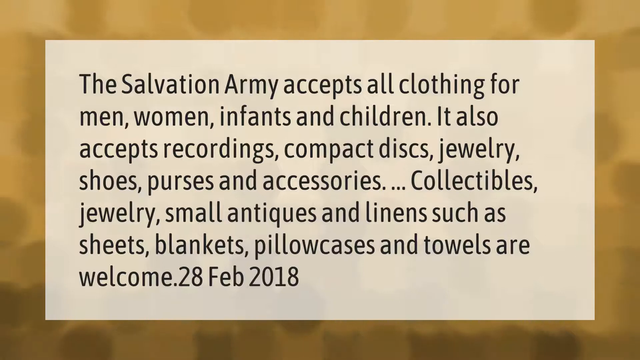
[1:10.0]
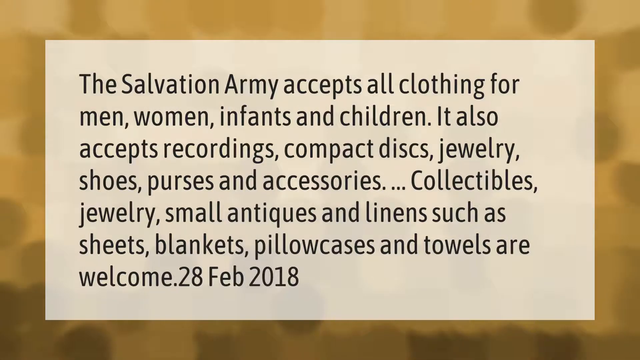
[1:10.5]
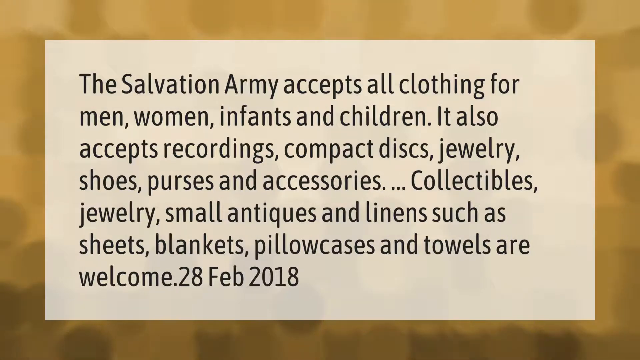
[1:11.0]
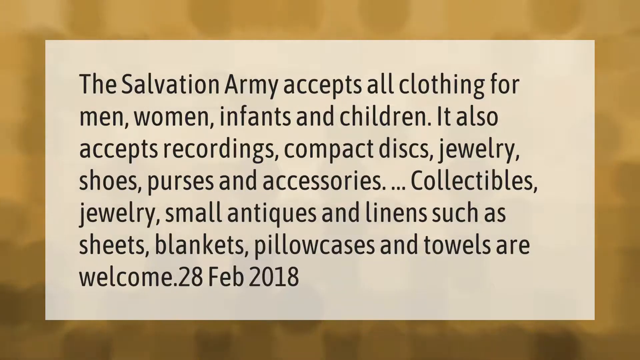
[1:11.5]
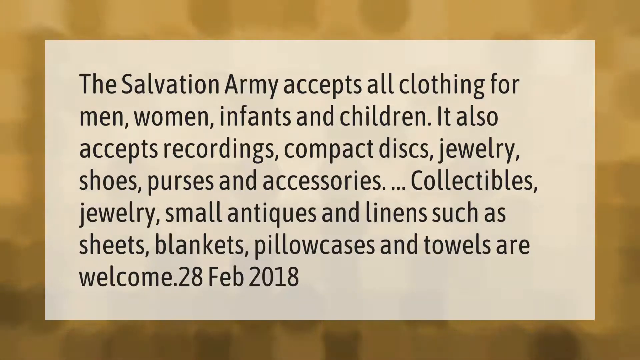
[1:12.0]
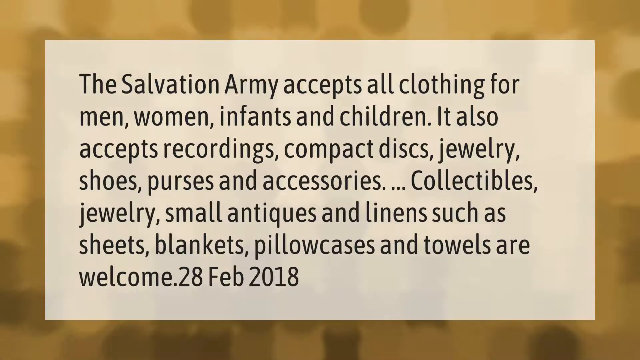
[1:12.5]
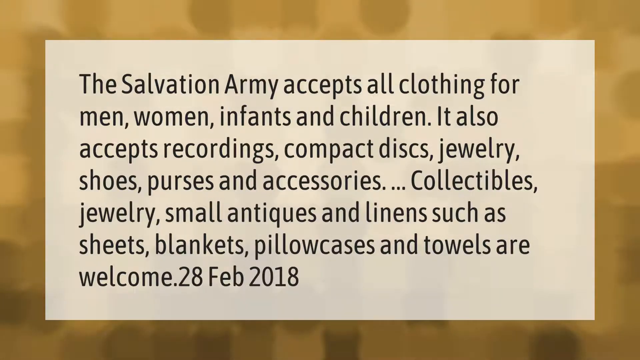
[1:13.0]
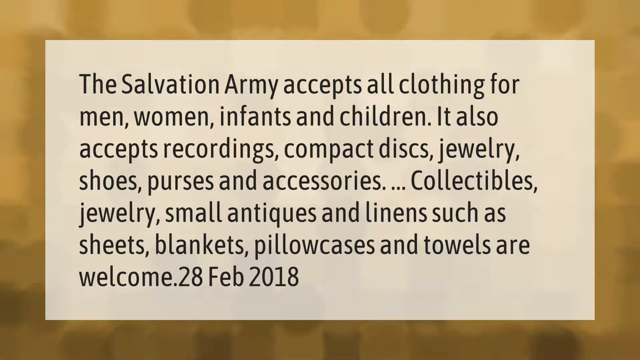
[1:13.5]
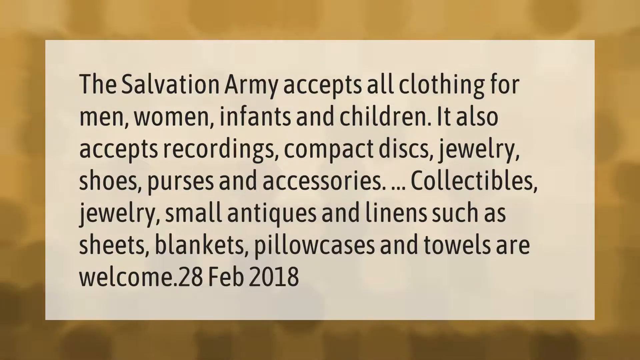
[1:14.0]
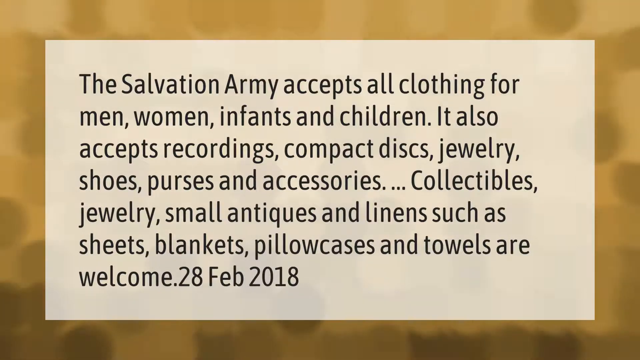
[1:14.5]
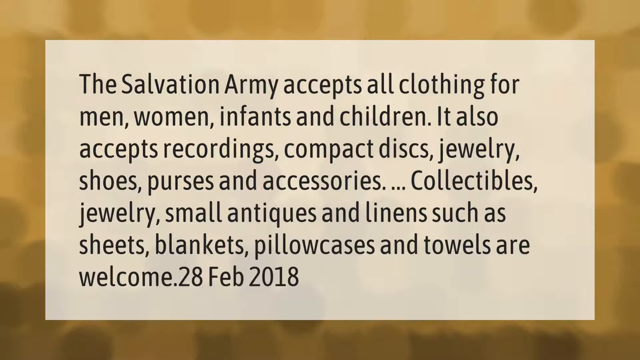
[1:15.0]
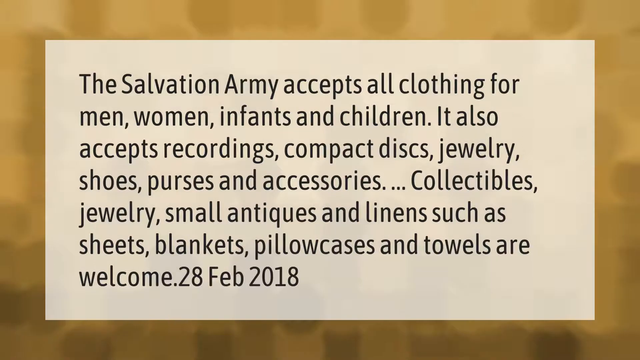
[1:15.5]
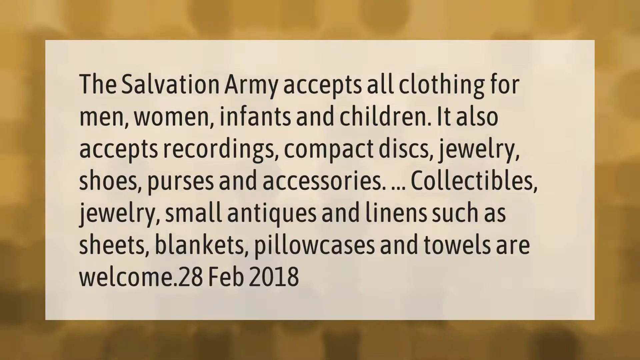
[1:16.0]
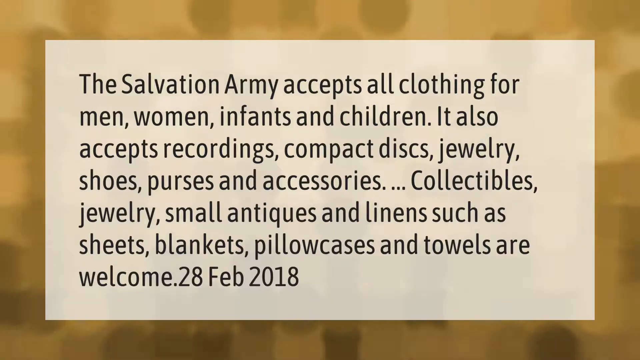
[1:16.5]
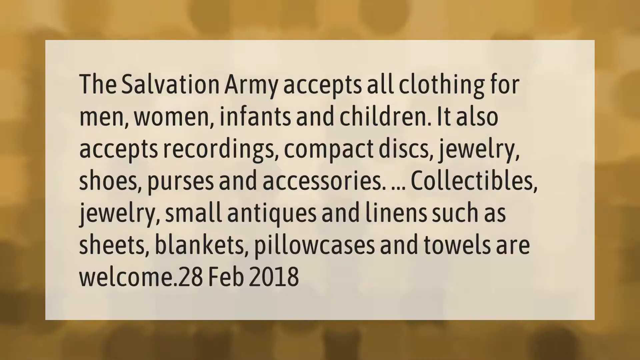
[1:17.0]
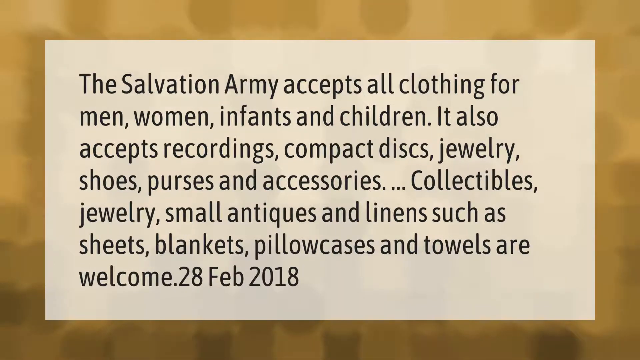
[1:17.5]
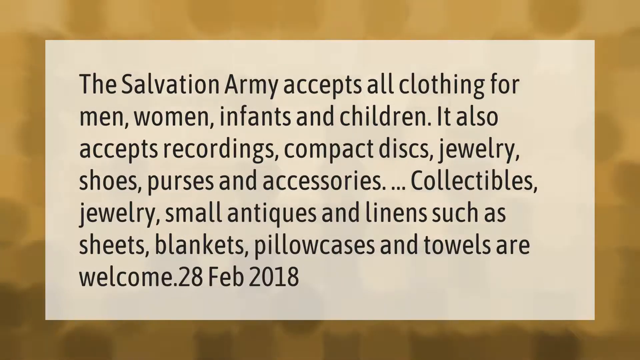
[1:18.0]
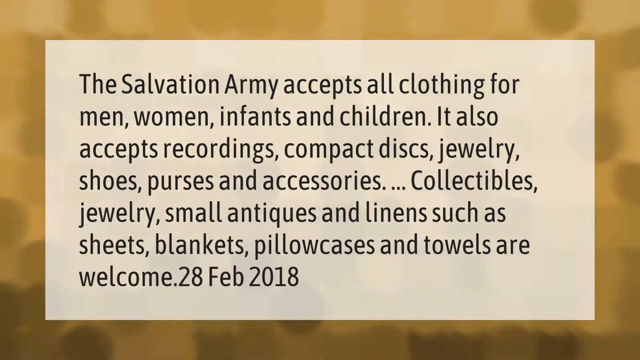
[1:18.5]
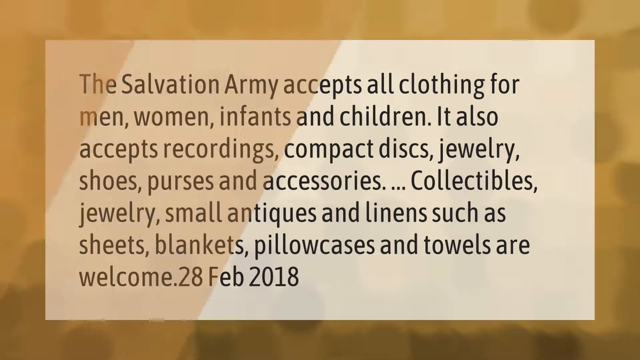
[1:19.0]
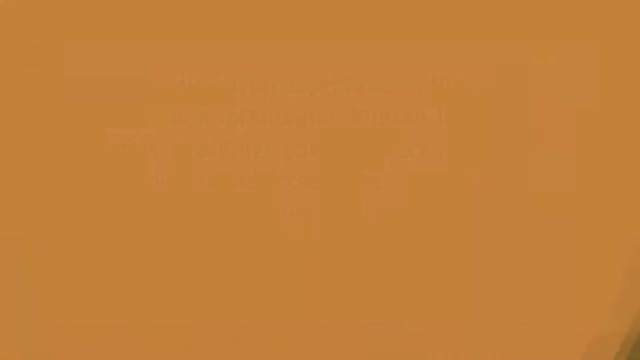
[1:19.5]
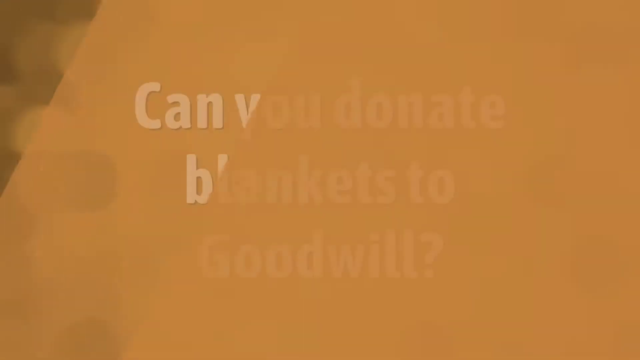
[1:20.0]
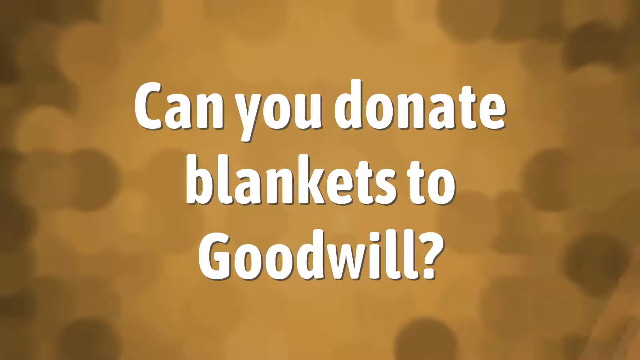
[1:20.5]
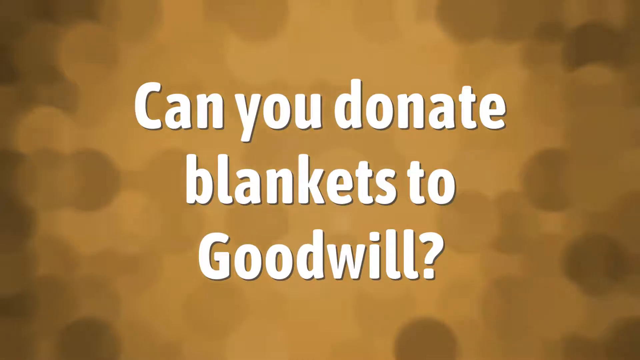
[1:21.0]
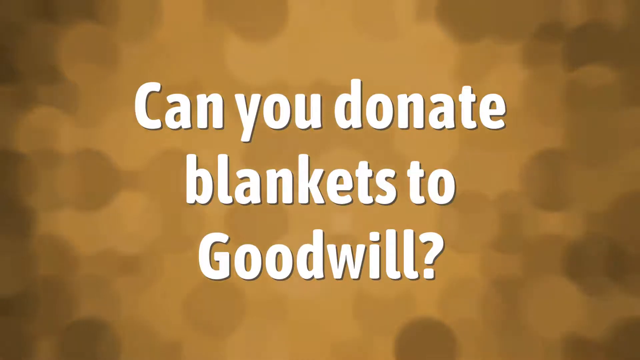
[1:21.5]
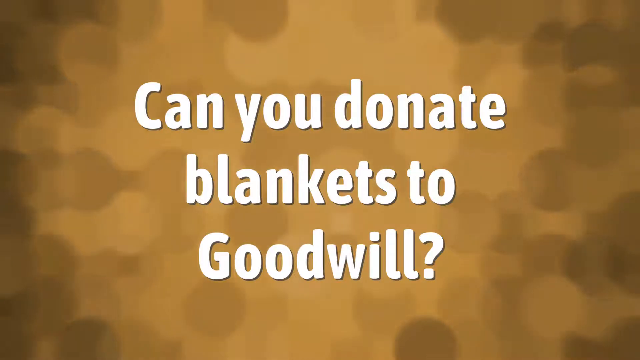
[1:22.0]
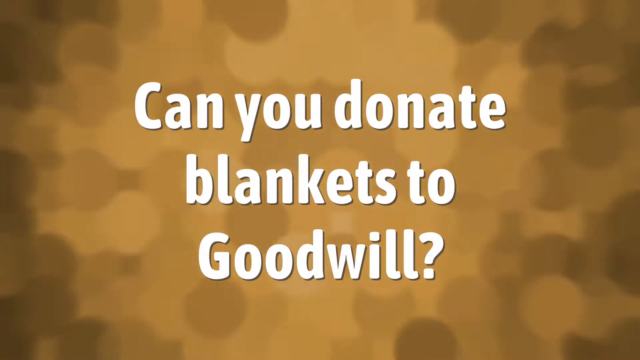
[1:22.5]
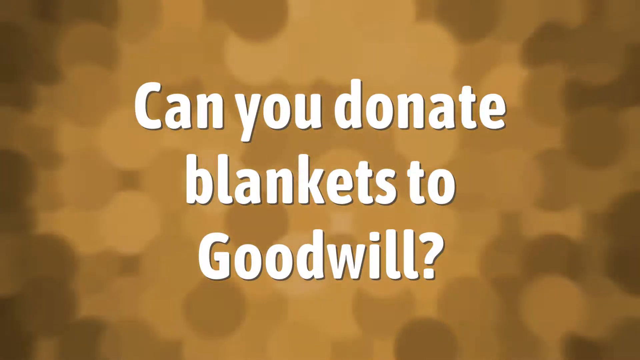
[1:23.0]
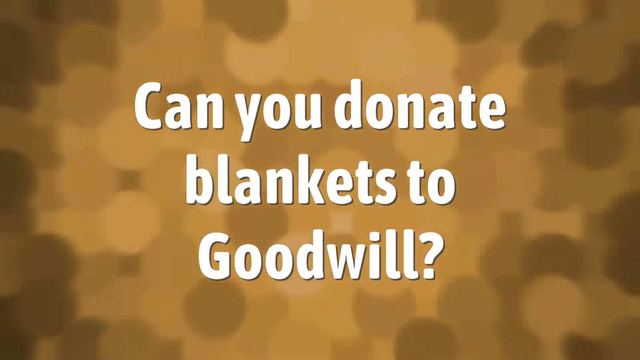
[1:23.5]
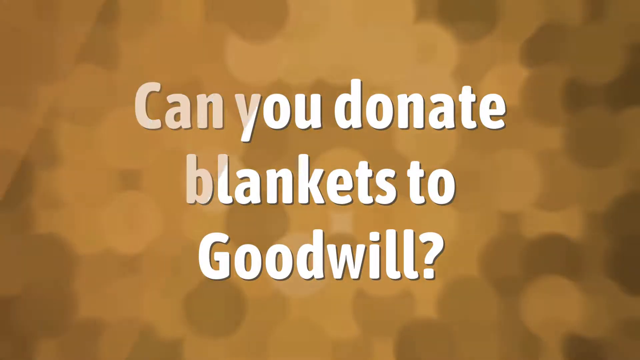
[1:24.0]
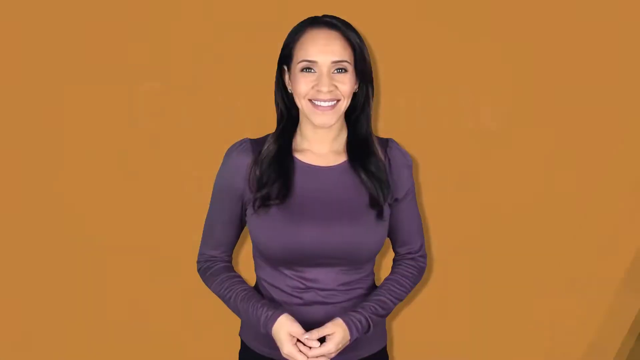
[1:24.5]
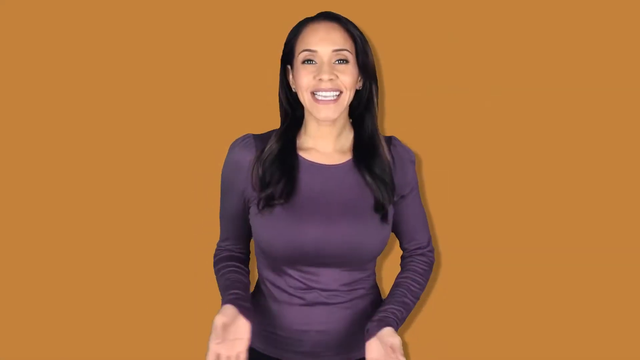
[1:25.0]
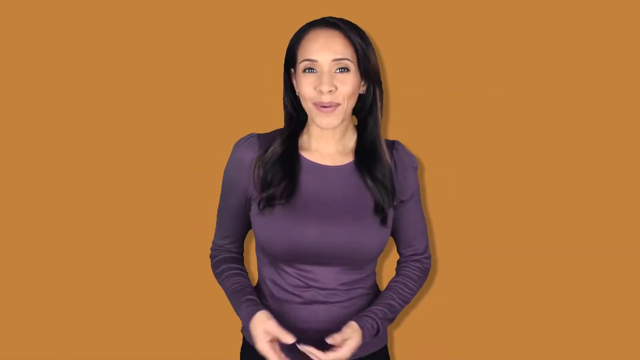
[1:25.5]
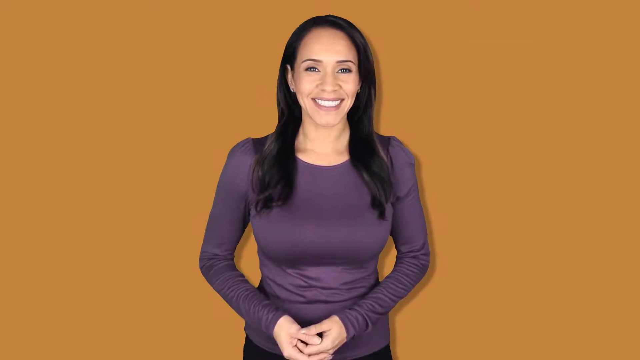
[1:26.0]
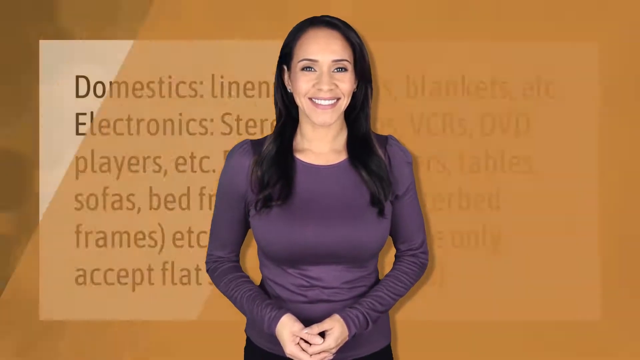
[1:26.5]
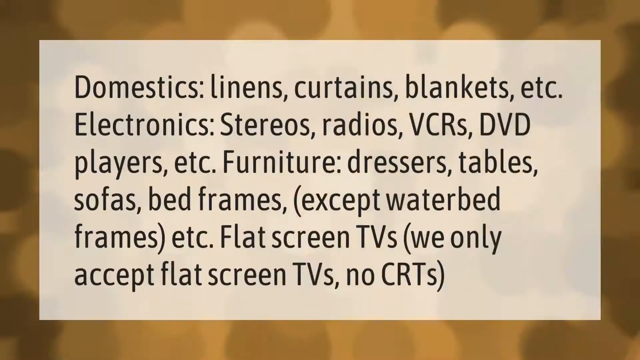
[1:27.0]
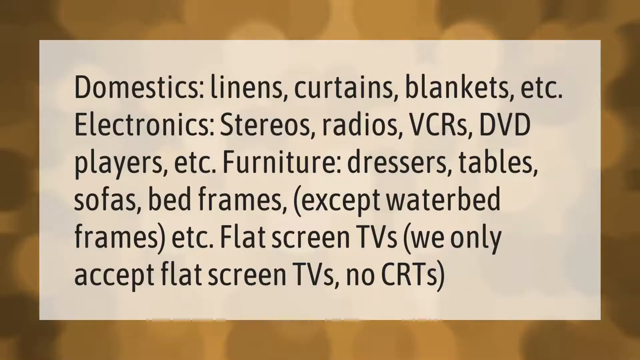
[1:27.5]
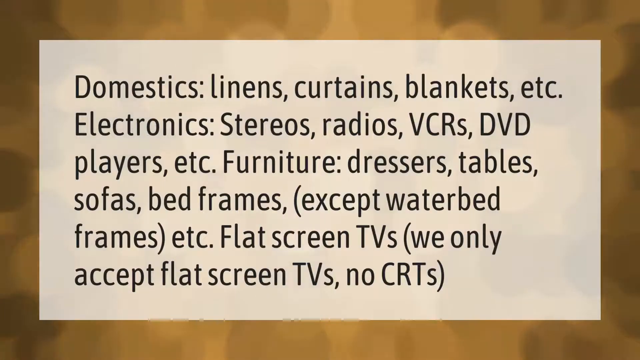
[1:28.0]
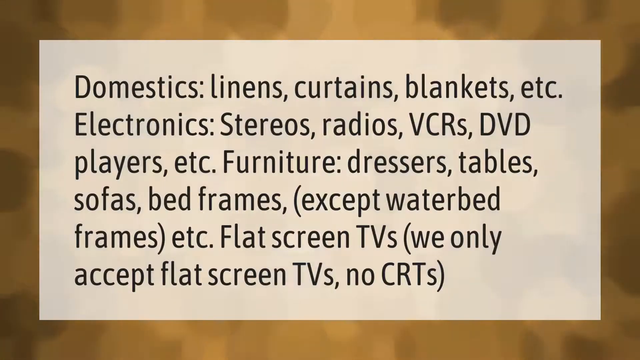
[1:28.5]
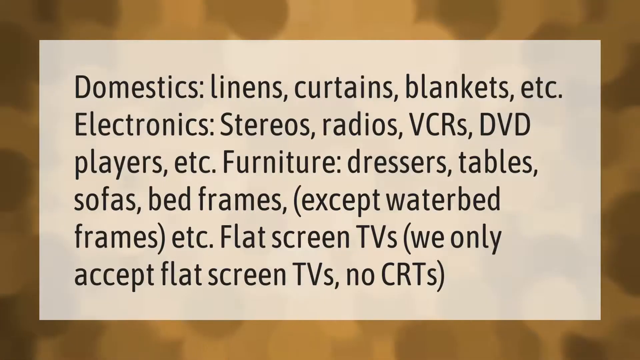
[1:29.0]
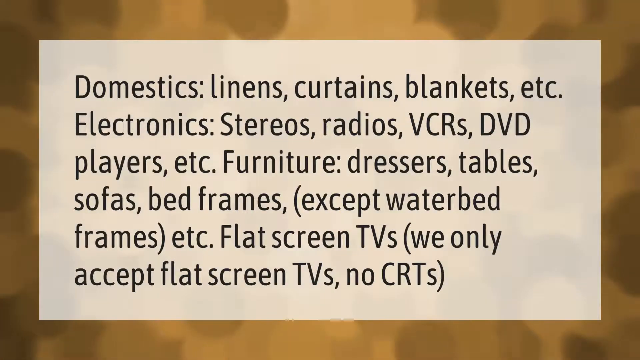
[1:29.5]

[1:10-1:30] The text about Salvation Army accepting all clothing continues, followed by the question "can you donate blankets to Goodwill?" The woman is shown talking. Text then lists items including "linens curtain blankets, etc", "radio VCRs DVD players, etc", "Furniture Dressers tables sofas" and "We only accept flex screen TVs. No CRT TVs".